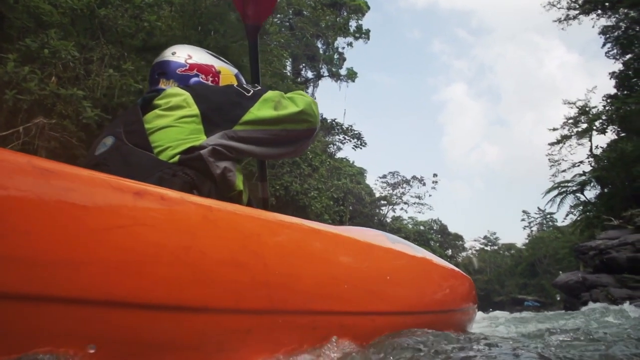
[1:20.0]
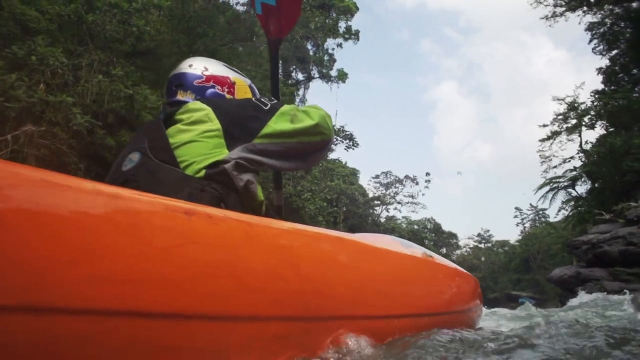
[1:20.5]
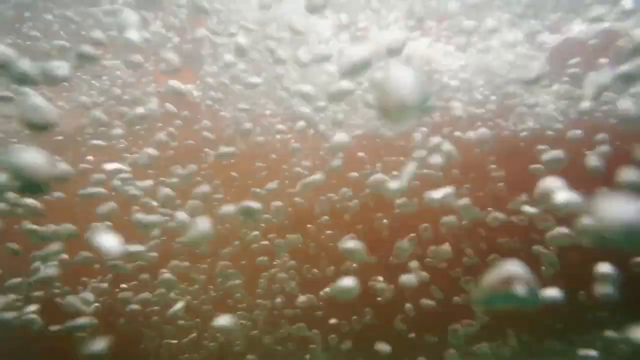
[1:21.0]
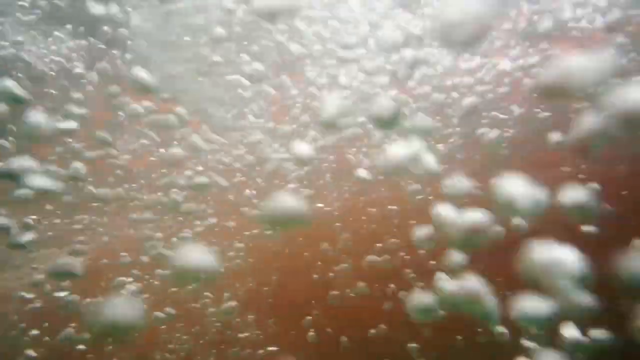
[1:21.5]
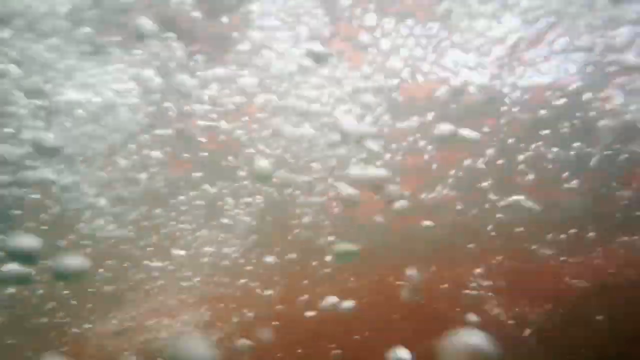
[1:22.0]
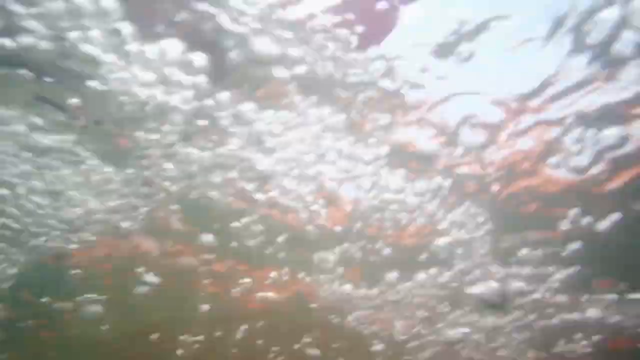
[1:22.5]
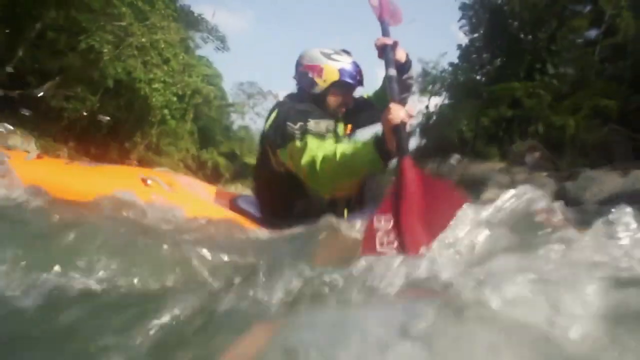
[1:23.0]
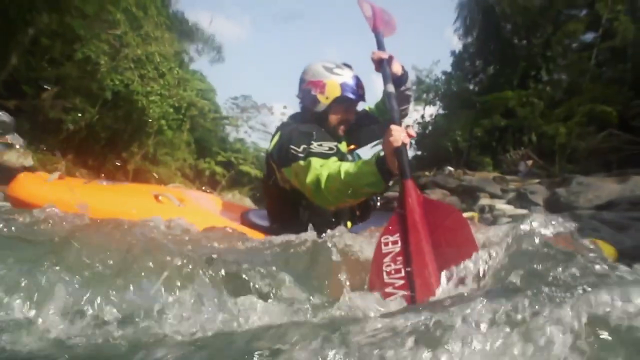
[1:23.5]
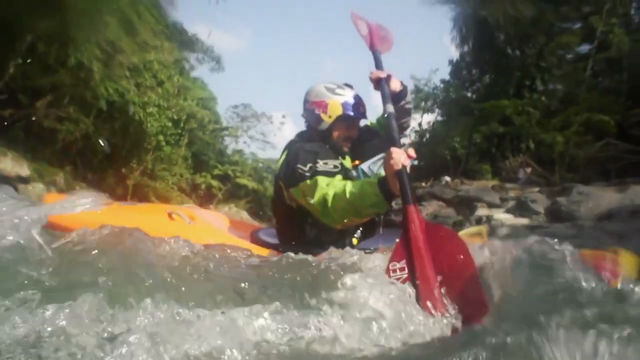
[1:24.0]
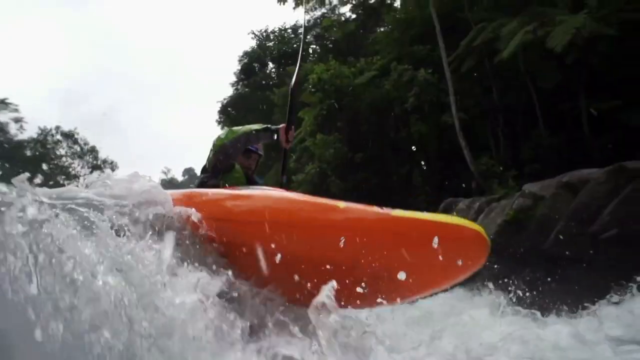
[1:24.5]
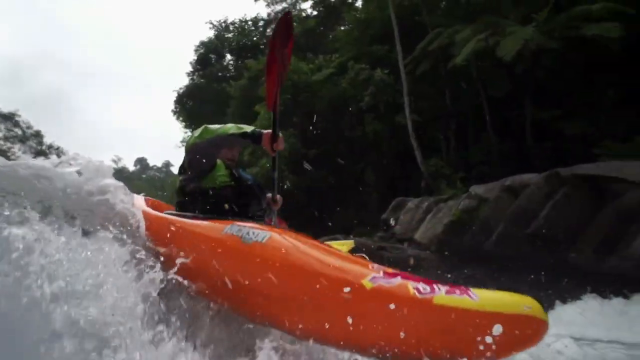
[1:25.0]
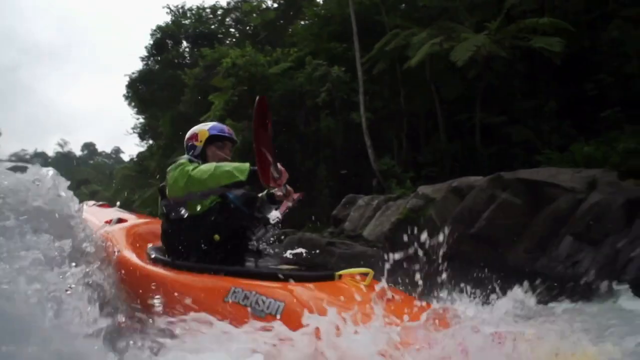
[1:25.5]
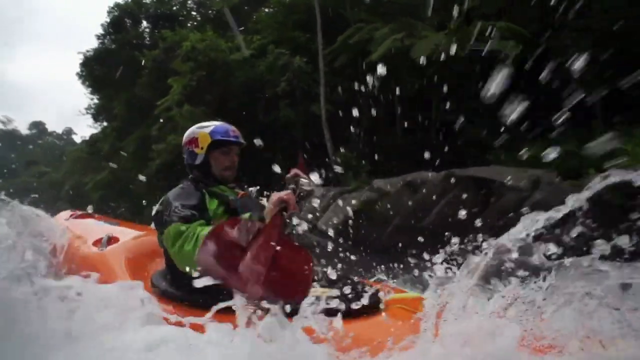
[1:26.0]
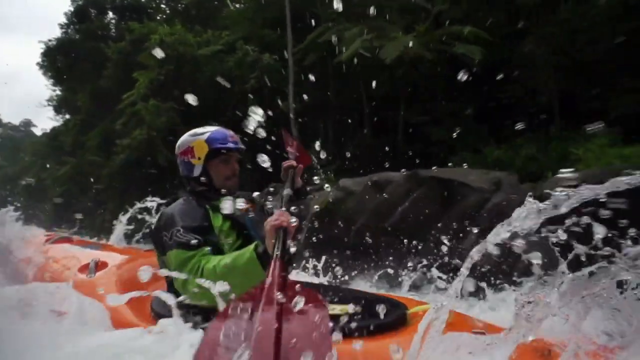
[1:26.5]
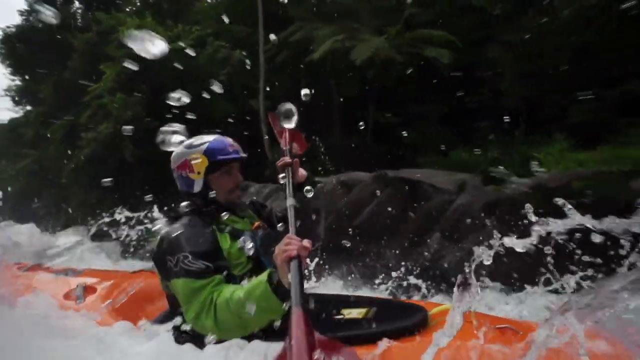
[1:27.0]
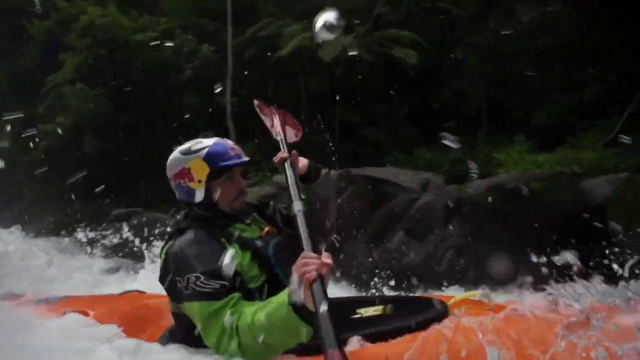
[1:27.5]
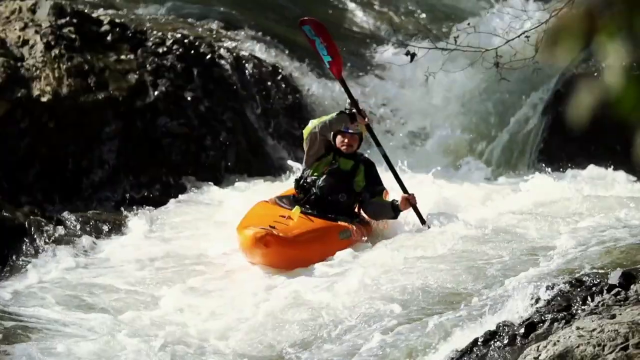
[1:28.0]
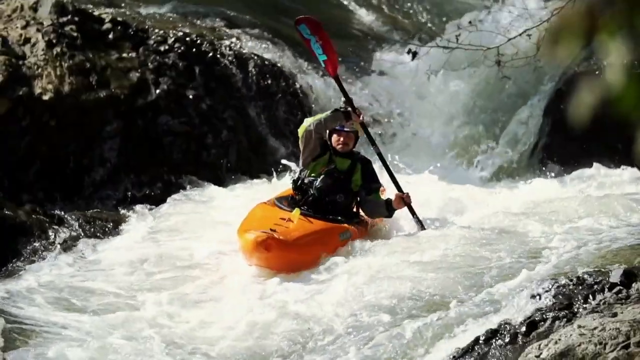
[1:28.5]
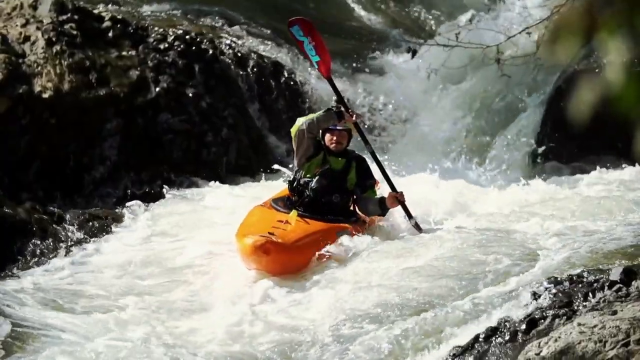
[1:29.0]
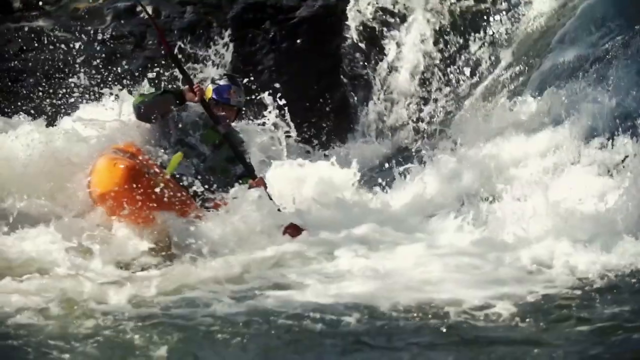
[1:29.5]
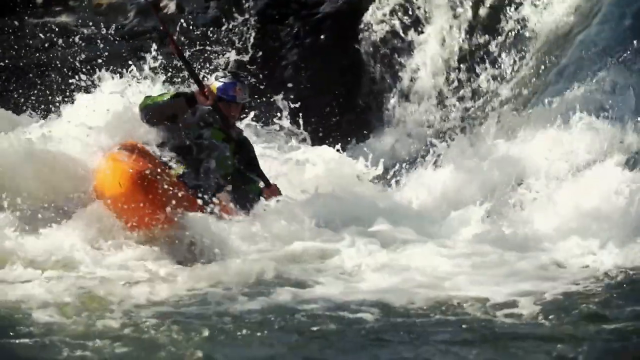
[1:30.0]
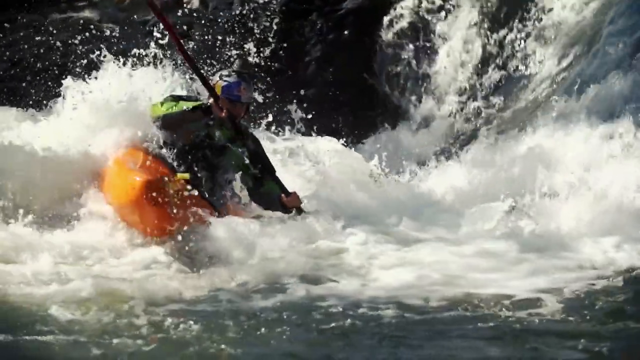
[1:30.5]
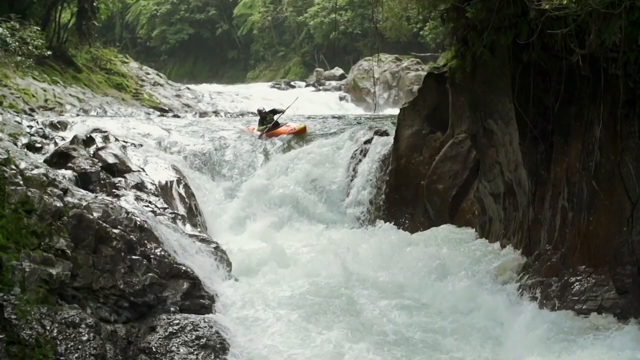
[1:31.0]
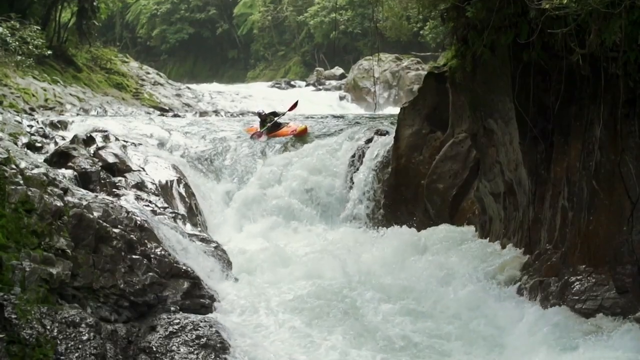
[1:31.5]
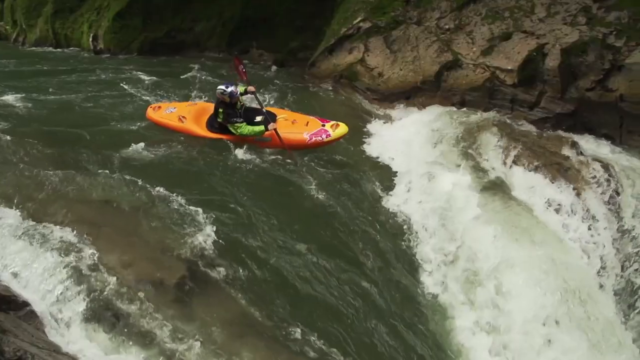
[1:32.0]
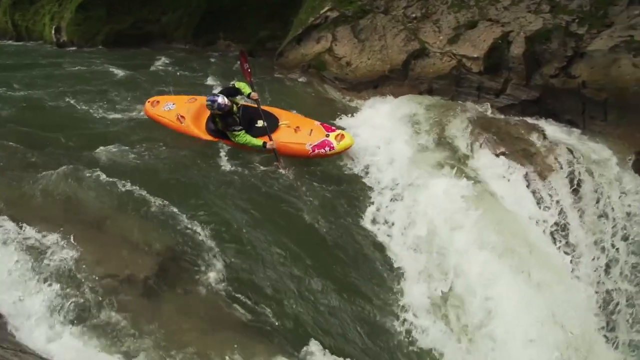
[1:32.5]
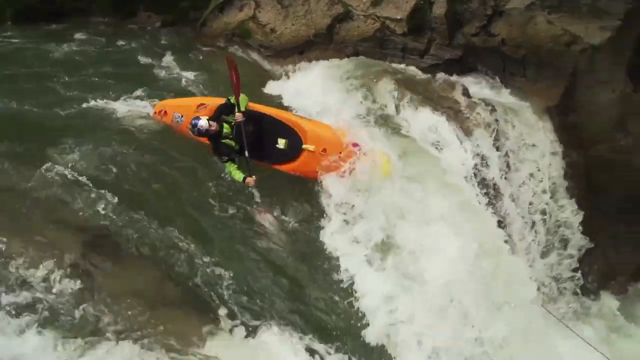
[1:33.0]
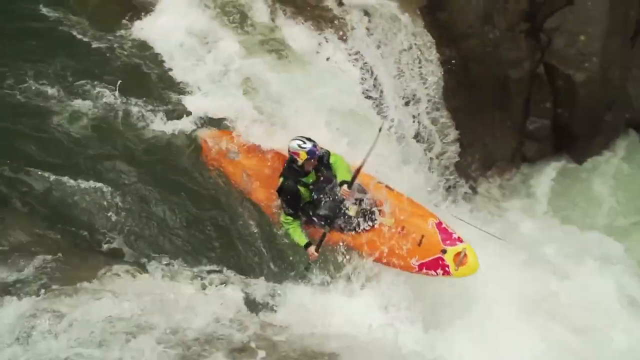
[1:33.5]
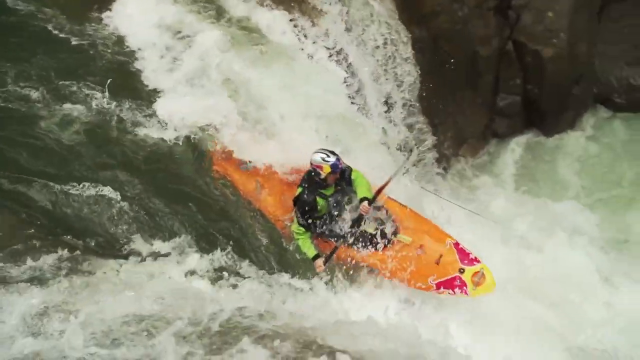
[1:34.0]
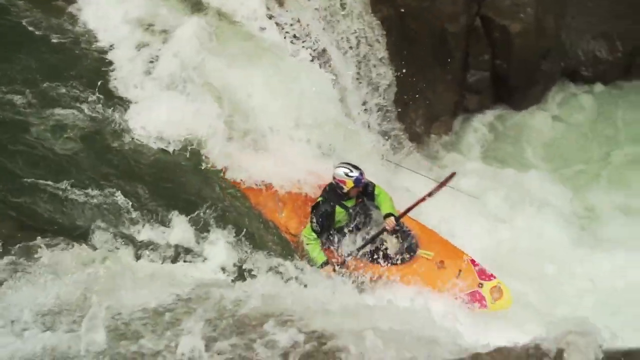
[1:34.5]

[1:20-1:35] Scenes cut back and forth between camera angles of intense kayaking on what appears to be a dangerous river. The water crashes and pools together and is not clear but almost white from all the movement and crashing. The kayaker is in a bright orange kayak and wears a green and black wetsuit and a helmet with the Red Bull logo. Quick-motion shots show him cutting through the water; in one portion he drops down a waterfall into the water below, and in others he bounds over waves and crashes through, navigating the rough water. Subtitles at the bottom of the screen seem to be his narration.